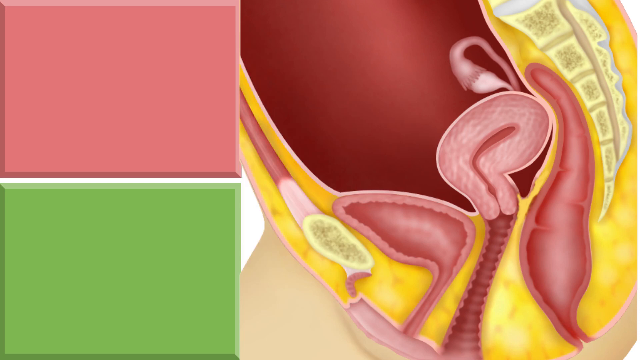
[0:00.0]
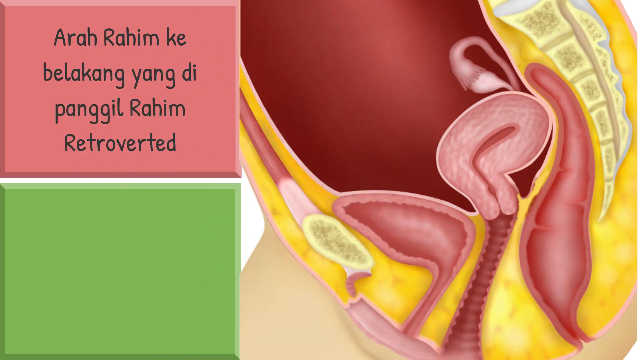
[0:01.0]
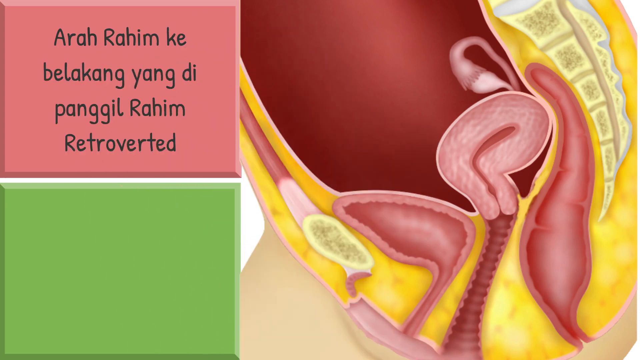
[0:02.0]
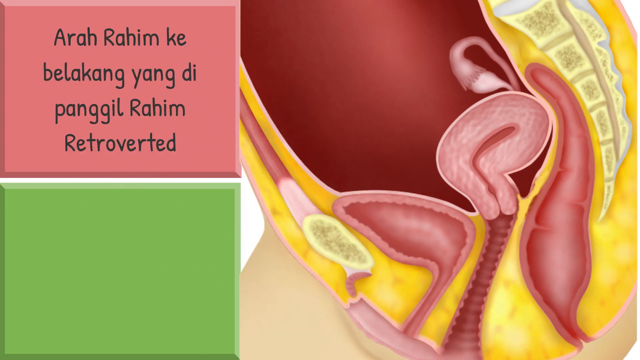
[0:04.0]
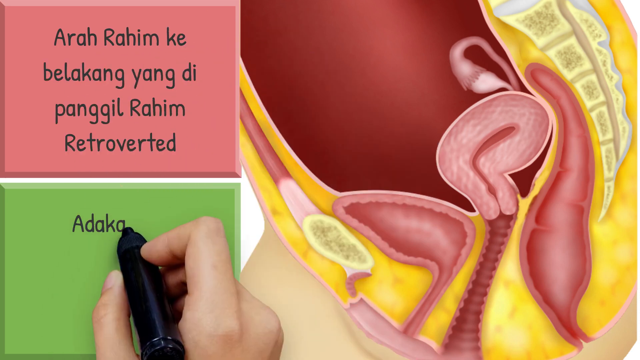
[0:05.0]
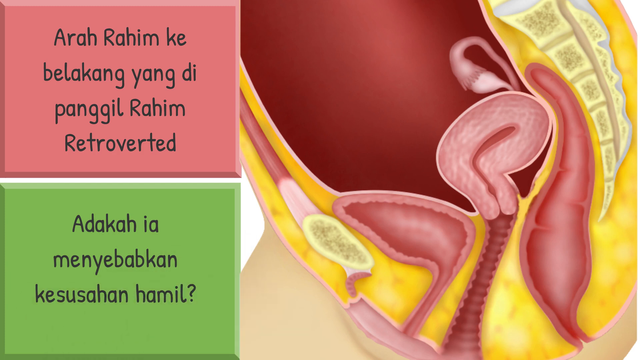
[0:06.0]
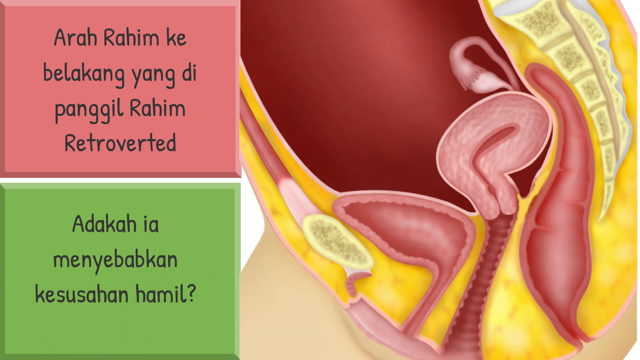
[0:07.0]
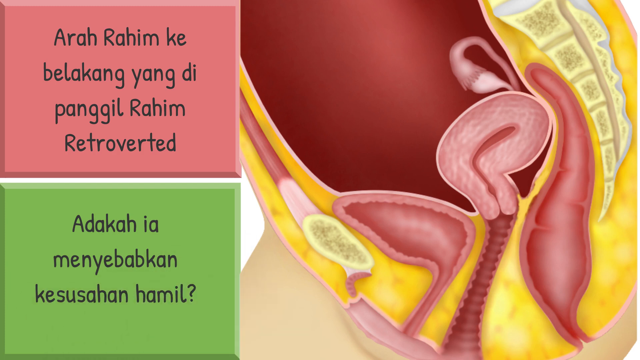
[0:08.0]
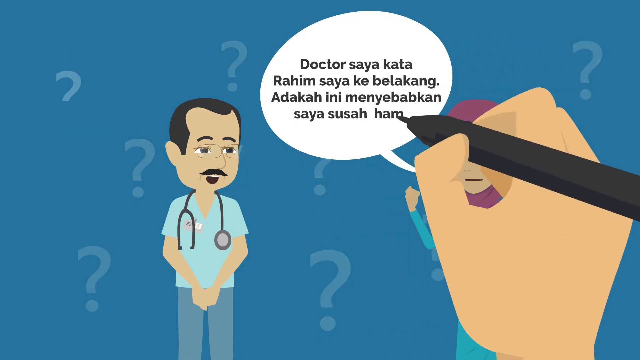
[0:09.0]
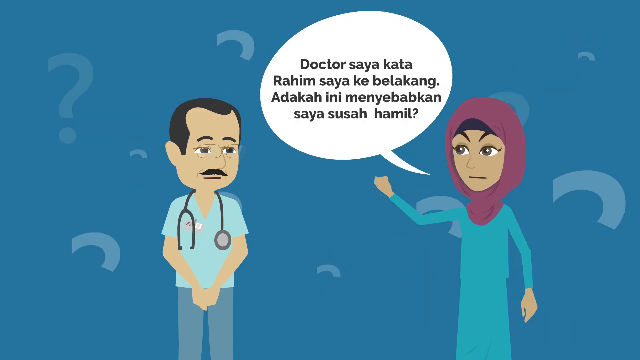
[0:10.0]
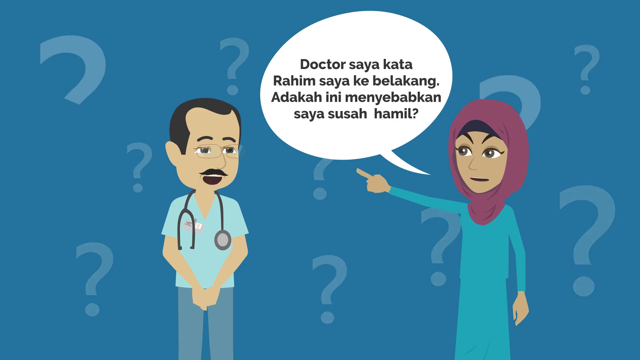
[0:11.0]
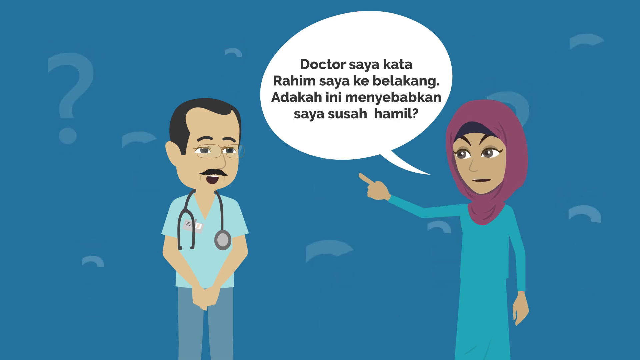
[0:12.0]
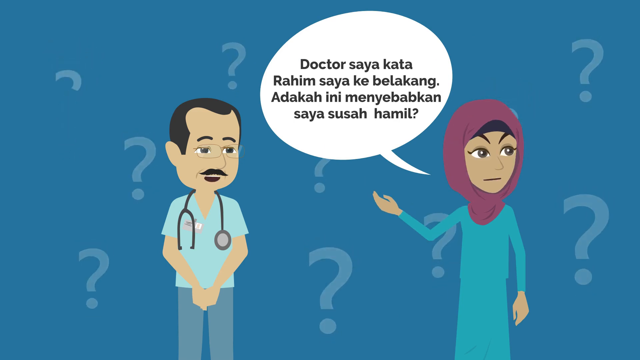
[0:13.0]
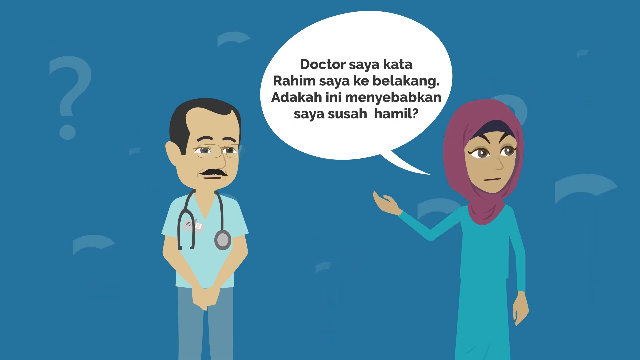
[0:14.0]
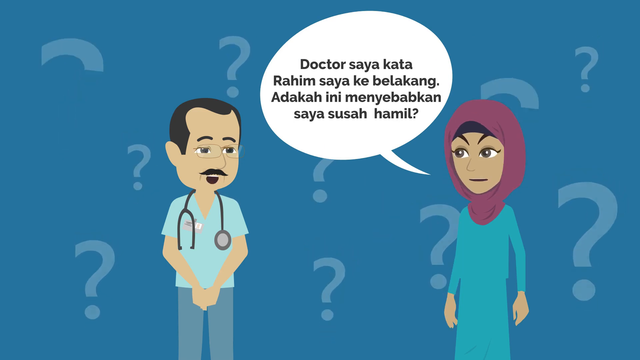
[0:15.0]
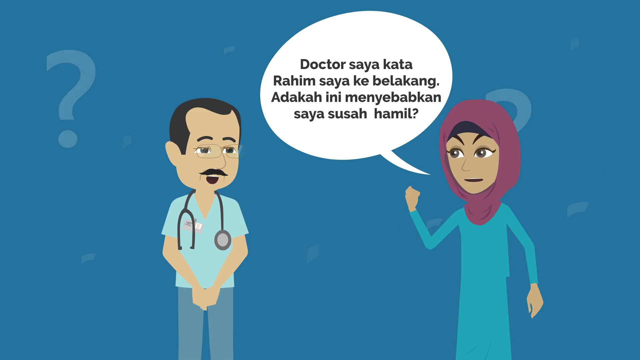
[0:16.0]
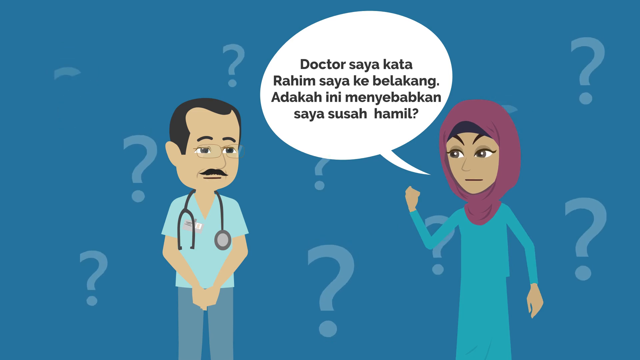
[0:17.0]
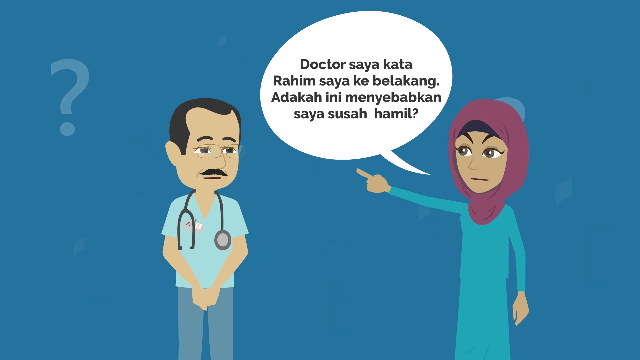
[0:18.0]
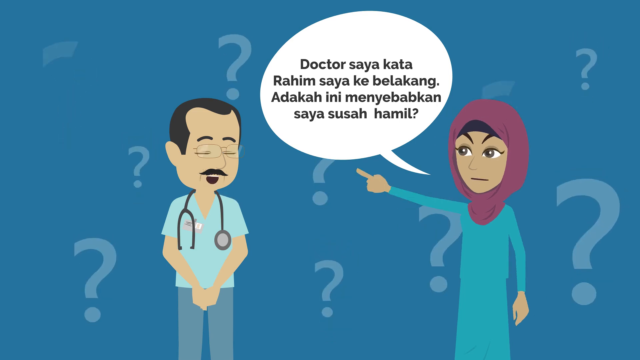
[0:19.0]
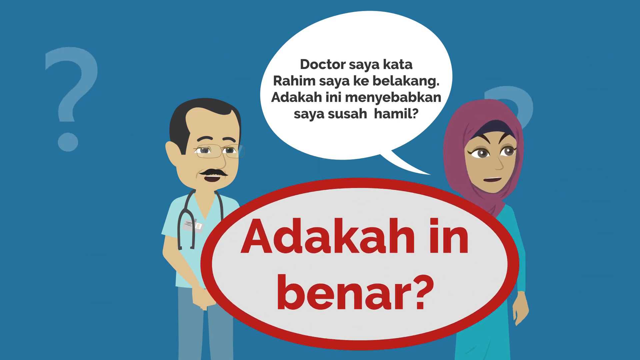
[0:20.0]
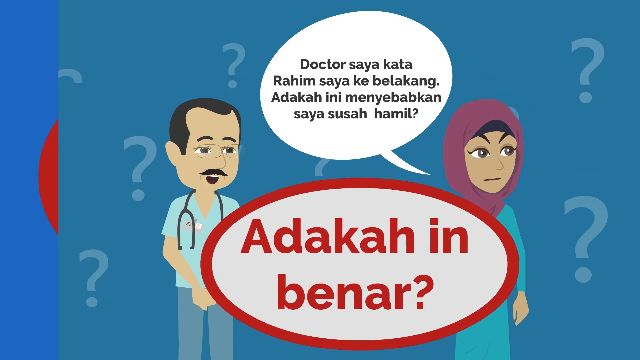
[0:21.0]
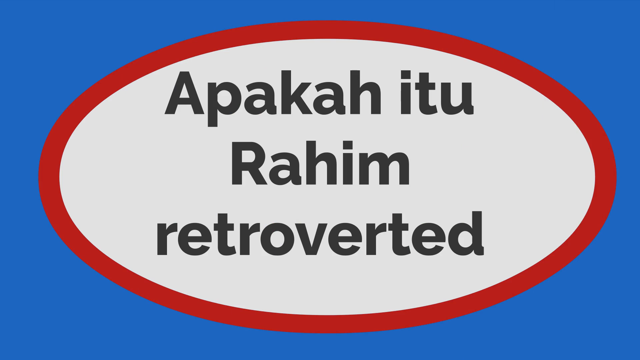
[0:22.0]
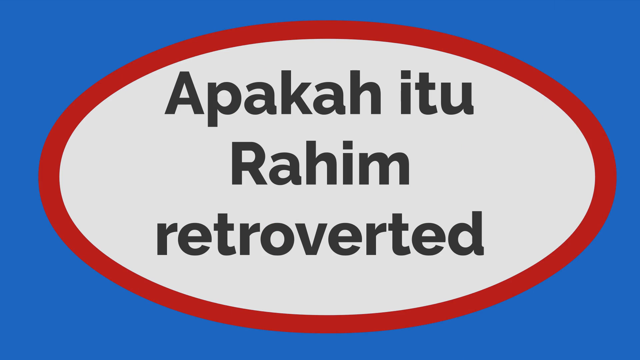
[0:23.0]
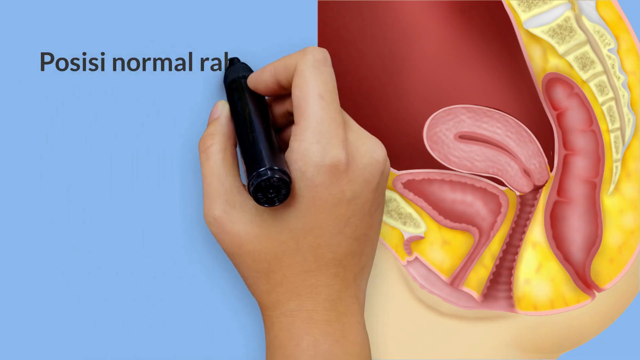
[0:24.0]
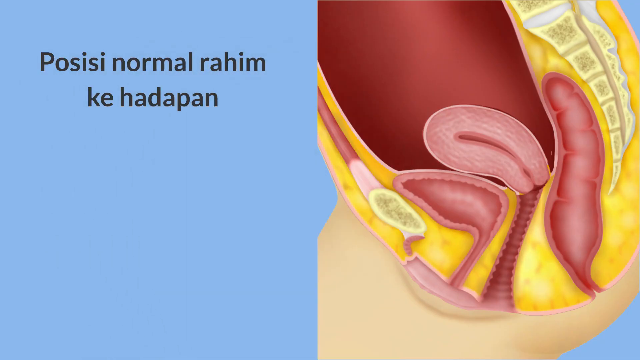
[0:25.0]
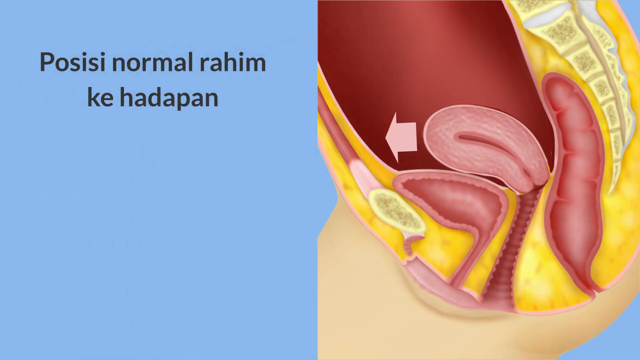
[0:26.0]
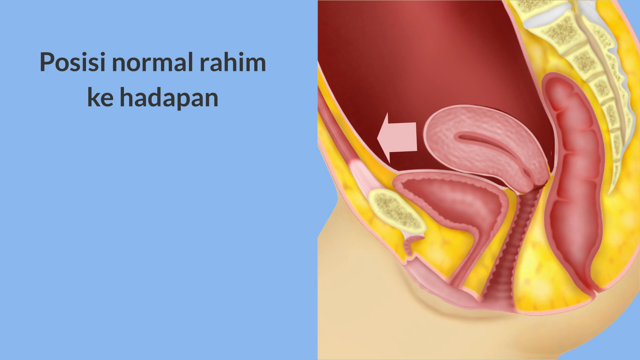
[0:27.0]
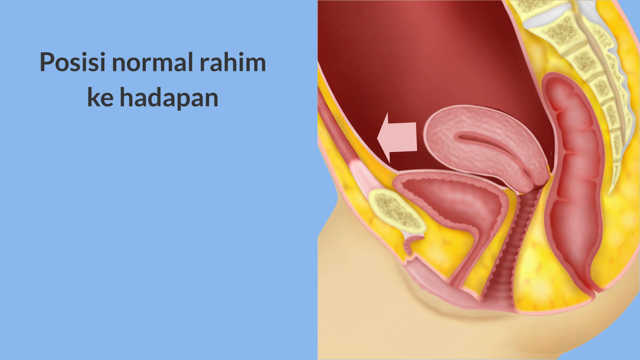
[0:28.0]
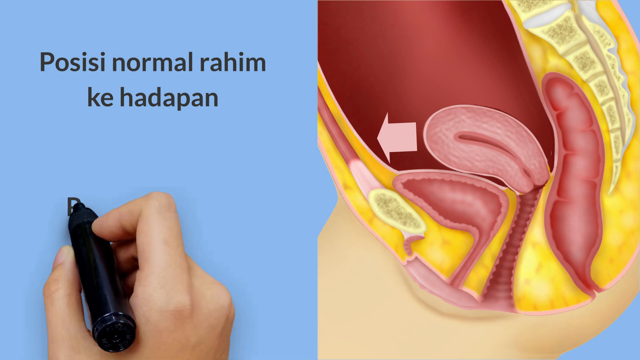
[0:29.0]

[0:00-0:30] The video appears to be an informative video about a uterus, with writing that is not in English. The first screen shows a pink box in the upper left and a green box at the bottom, with a white line between them. To the right is what looks like a picture or drawing of a uterus. A sort of cartoon-style hand comes up and writes in the pink box, and then the hand, with a black pen, writes in the bottom green box; the writing there includes a question mark. The video then moves to a new screen with a blue background covered in question marks. On the left is a doctor wearing a stethoscope, with dark hair and a mustache, dressed in blue scrubs. On the right is a woman in a pink hair covering and a green dress, who is asking the doctor a question, and he answers her. Next, a big question appears in a white box with a red circle around it on a blue background.